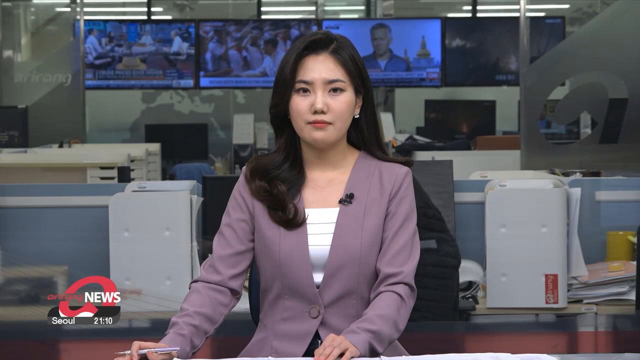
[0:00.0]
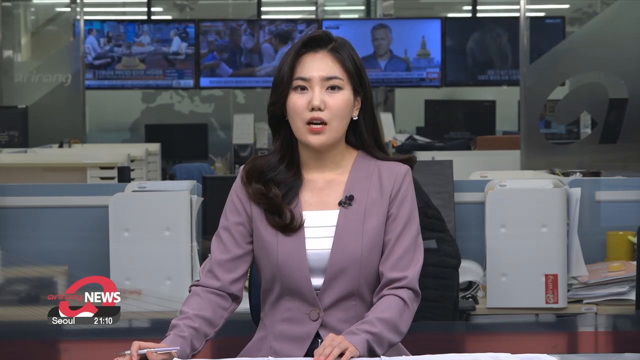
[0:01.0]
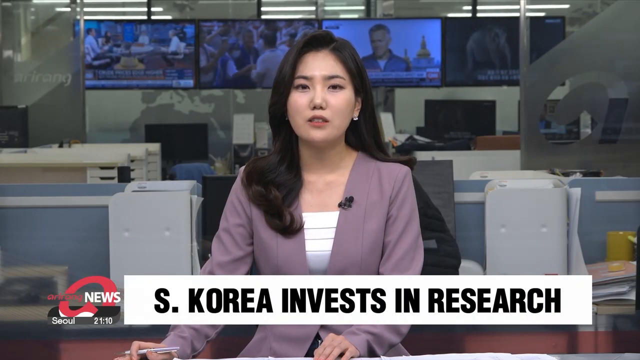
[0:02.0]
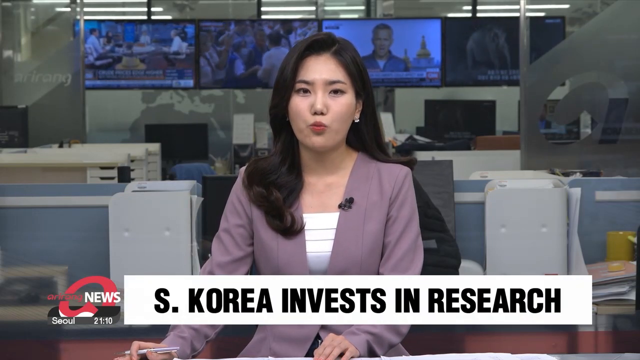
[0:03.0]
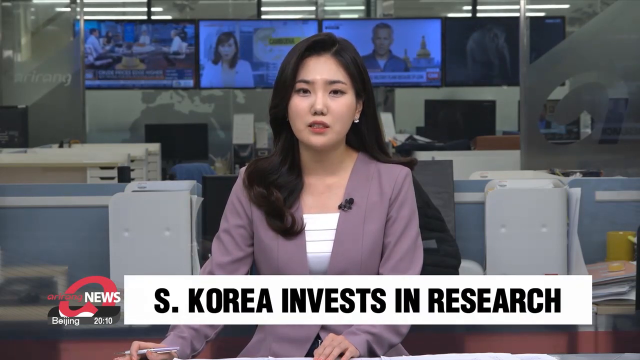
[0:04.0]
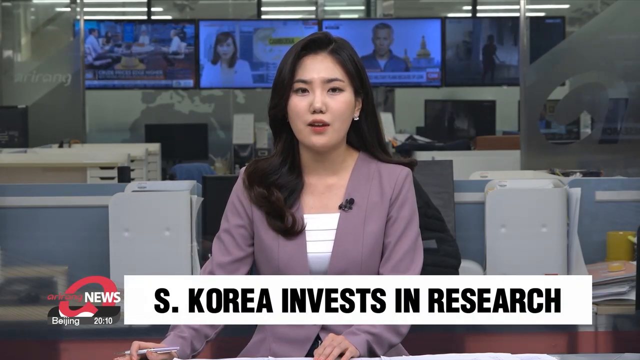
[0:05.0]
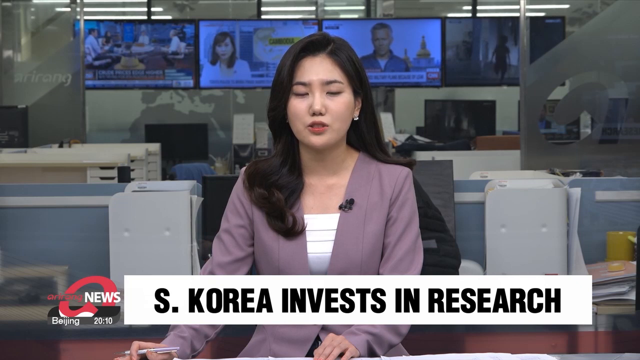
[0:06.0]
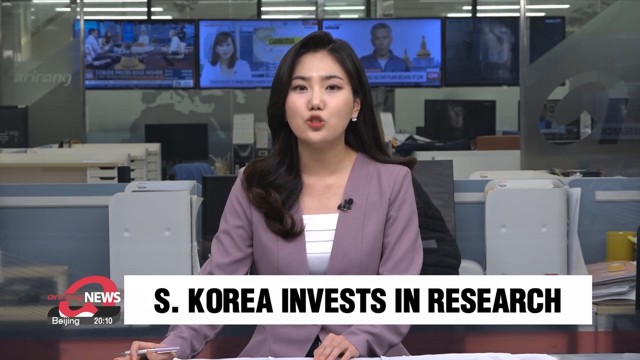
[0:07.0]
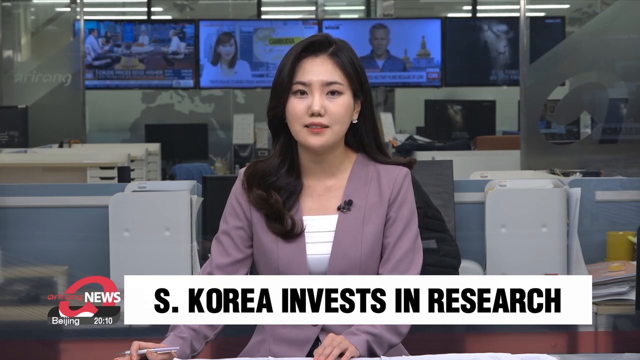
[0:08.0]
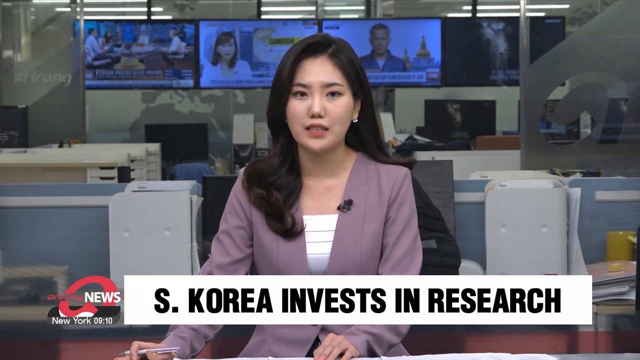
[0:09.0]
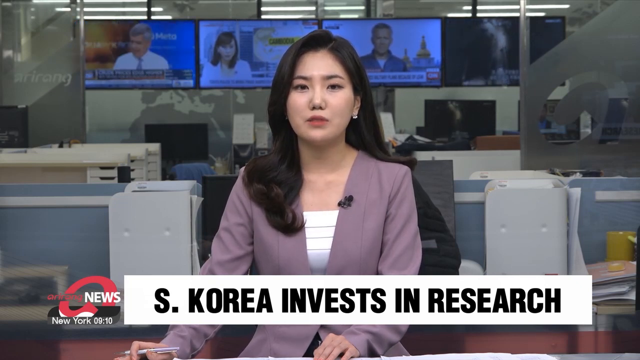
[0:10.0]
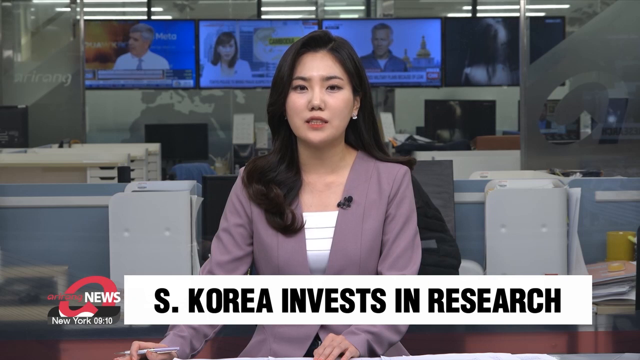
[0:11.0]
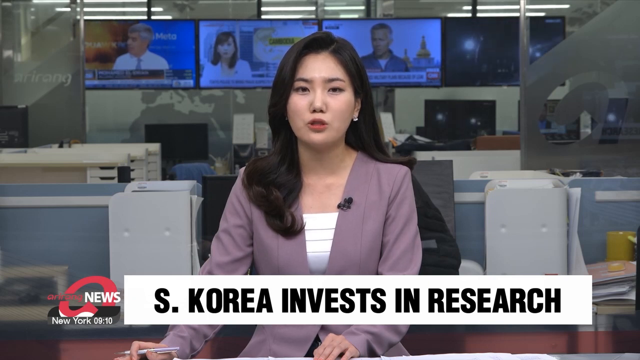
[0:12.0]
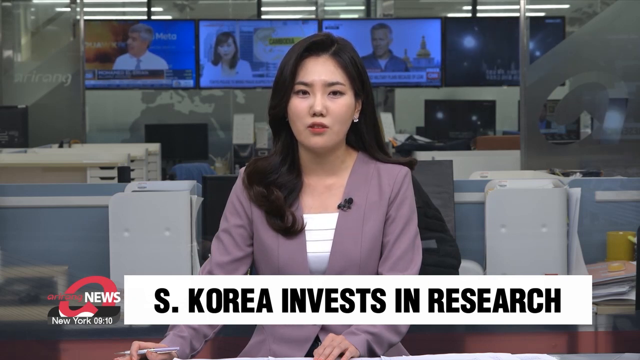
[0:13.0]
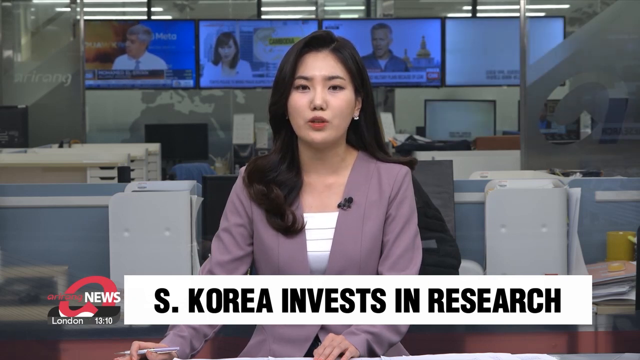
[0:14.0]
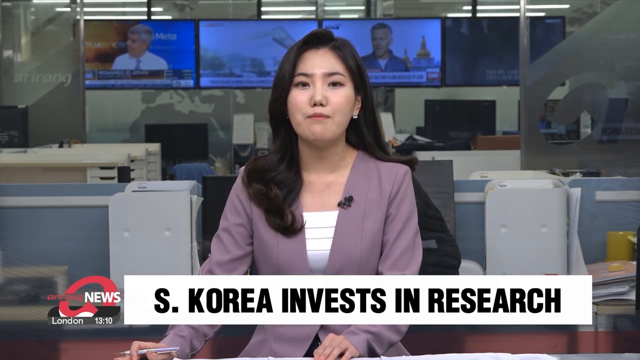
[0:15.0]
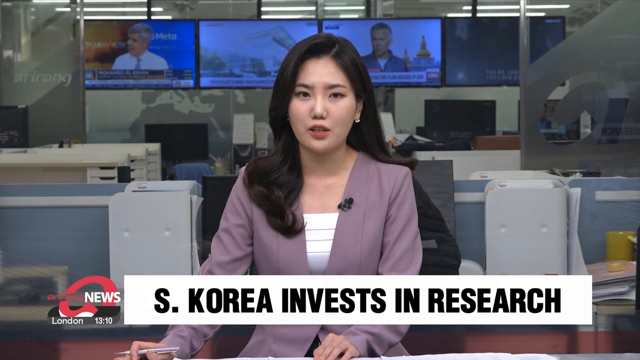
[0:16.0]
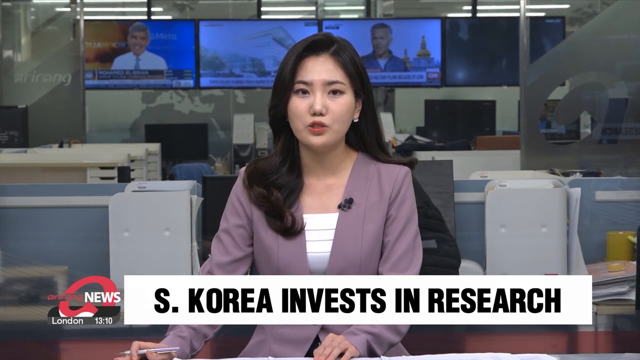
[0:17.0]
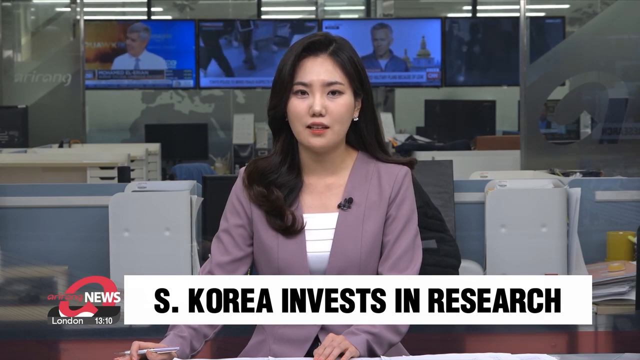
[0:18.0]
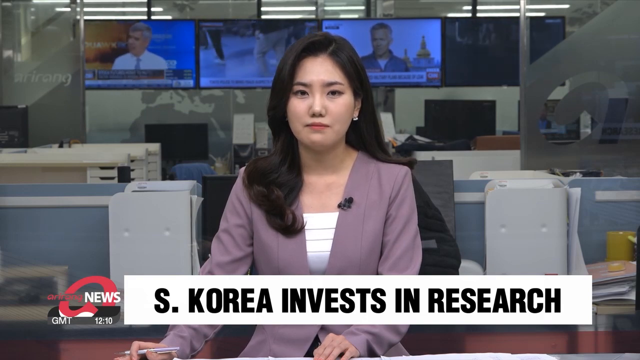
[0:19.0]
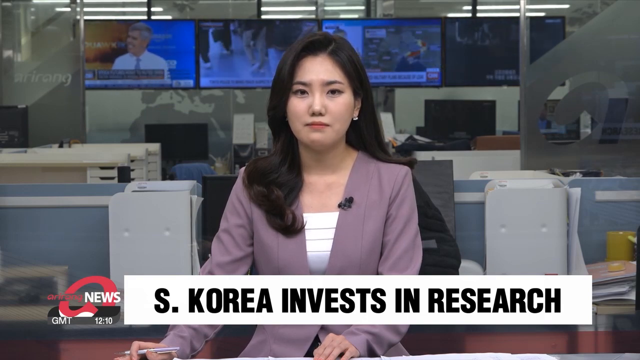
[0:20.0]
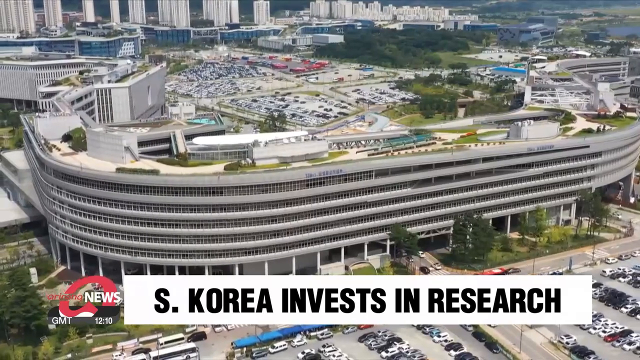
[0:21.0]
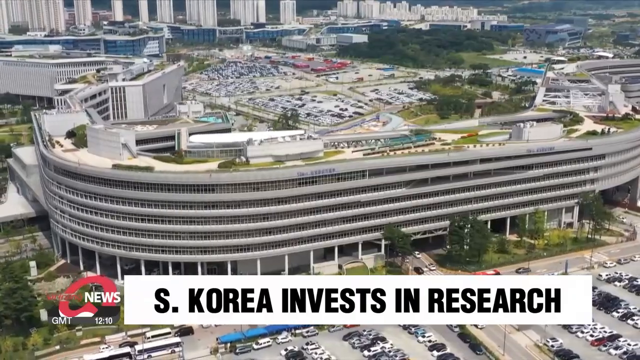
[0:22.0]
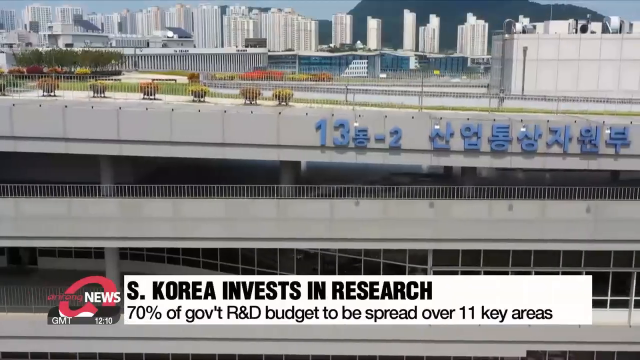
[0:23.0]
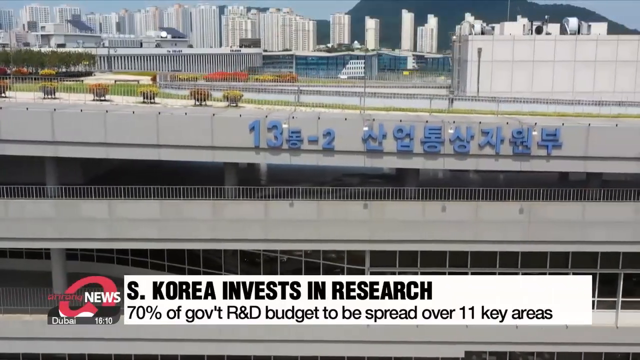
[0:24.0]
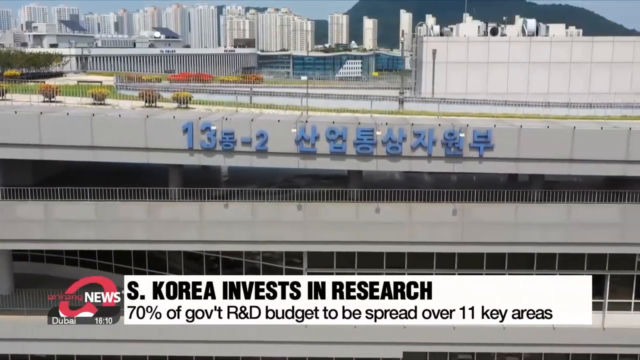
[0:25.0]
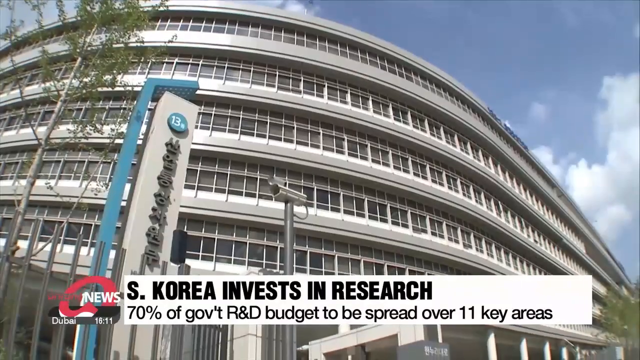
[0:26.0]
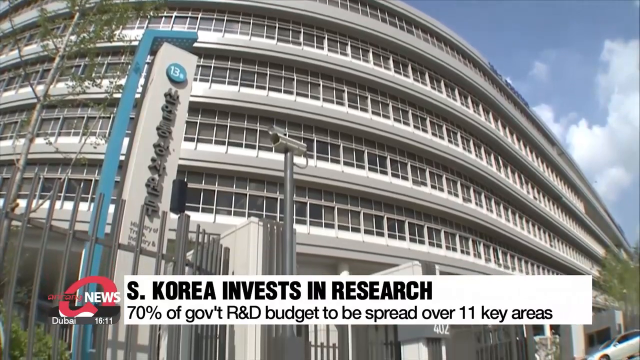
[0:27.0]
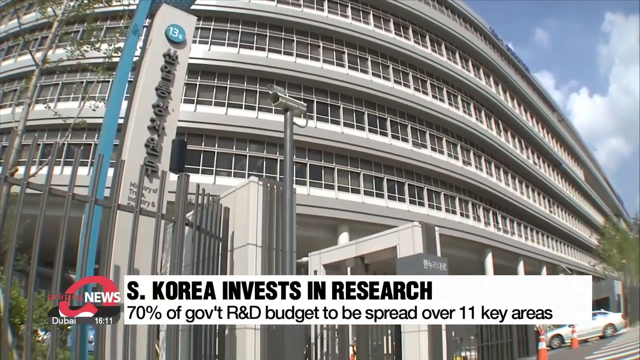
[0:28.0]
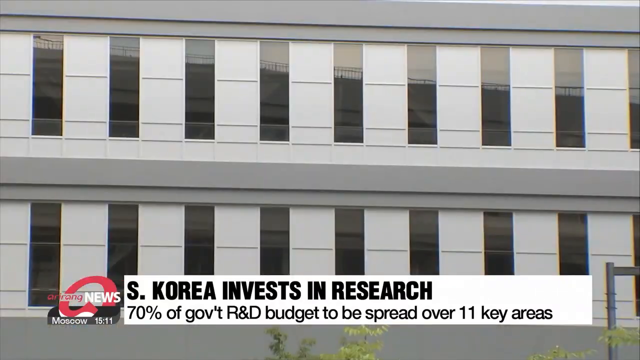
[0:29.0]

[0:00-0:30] A news broadcast appears on screen, with "news" in the corner and "Seoul" shown, suggesting it is in Korea. A woman with medium-length dark hair, wearing a purple blazer over a white top with a small microphone clipped to the blazer, is sitting and talking. Text across the bottom of the screen reads "South Korea invests in research." As she talks, the clock at the bottom switches from Seoul to New York to London. She stops talking, and the video cuts to a building seen from what looks like a bird's-eye view, apparently from a drone or something similar. Another shot of the building shows what look like letters on top, written in Korean. Text at the bottom reads "70% of government R&D budget to be spread over 11 key areas." A third angle shows the building from the front where the gates are, followed by some windows.